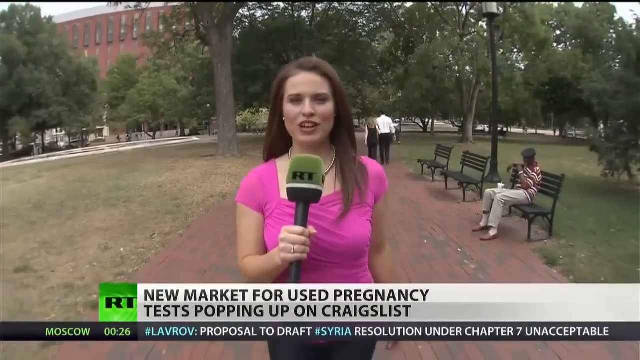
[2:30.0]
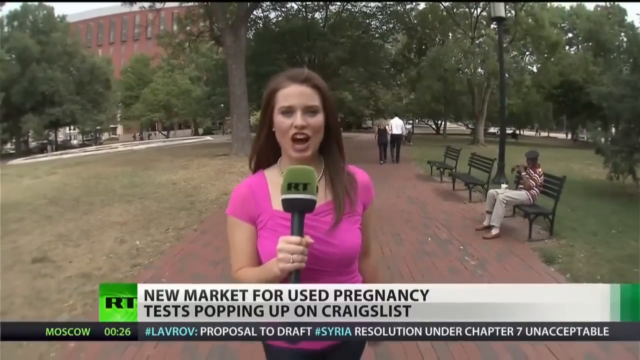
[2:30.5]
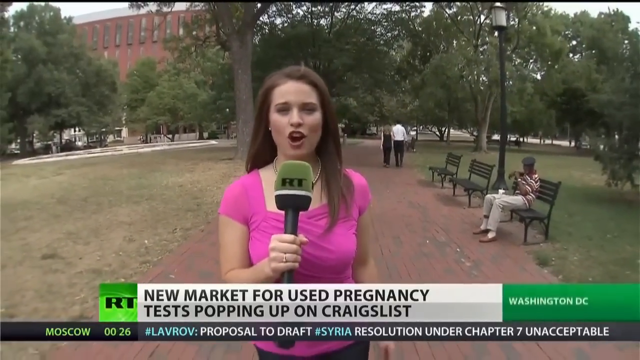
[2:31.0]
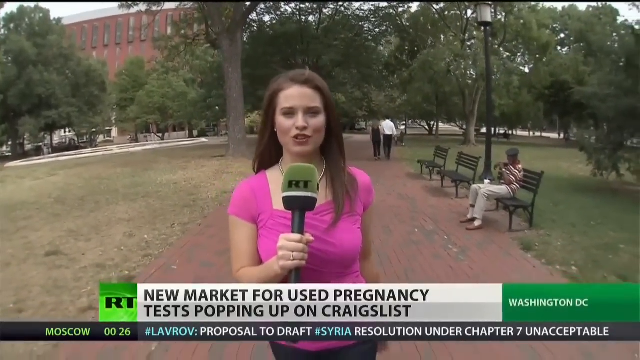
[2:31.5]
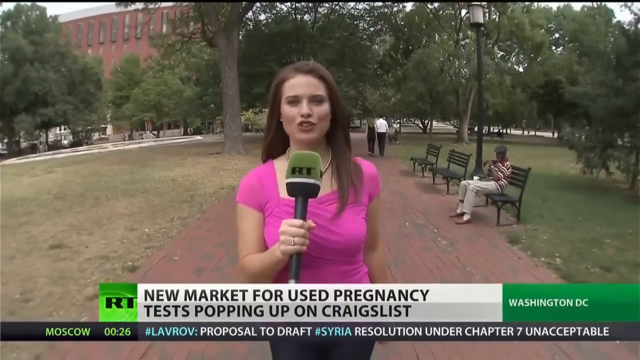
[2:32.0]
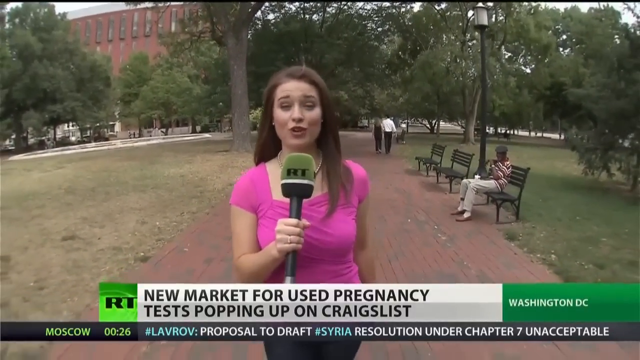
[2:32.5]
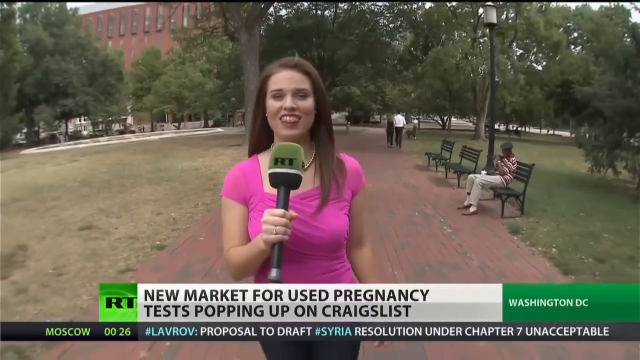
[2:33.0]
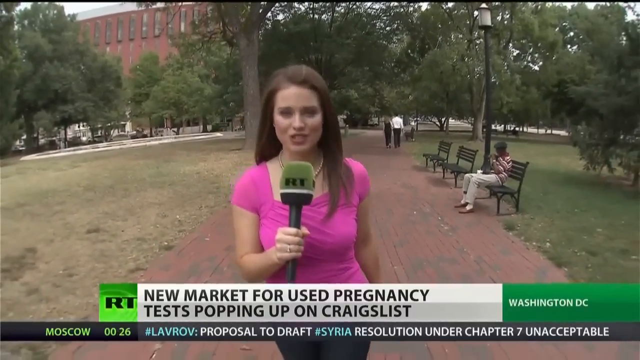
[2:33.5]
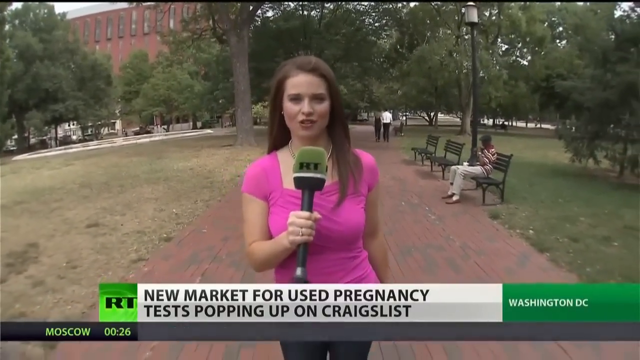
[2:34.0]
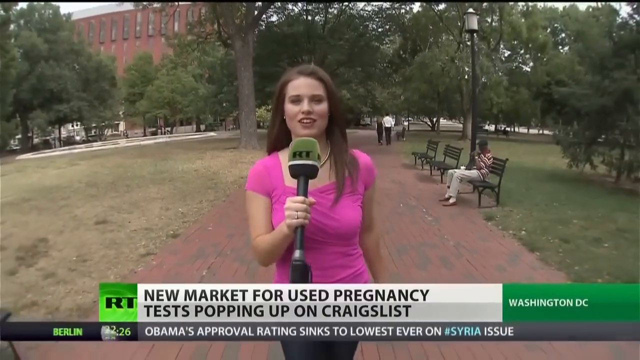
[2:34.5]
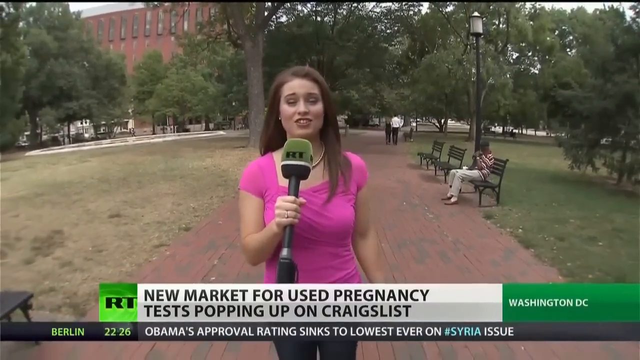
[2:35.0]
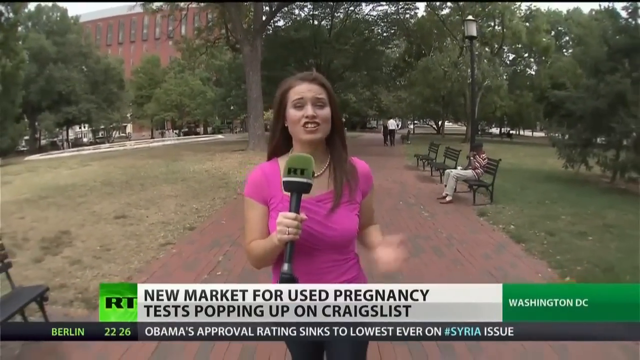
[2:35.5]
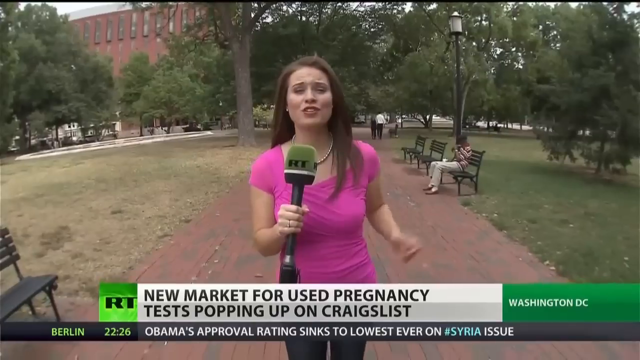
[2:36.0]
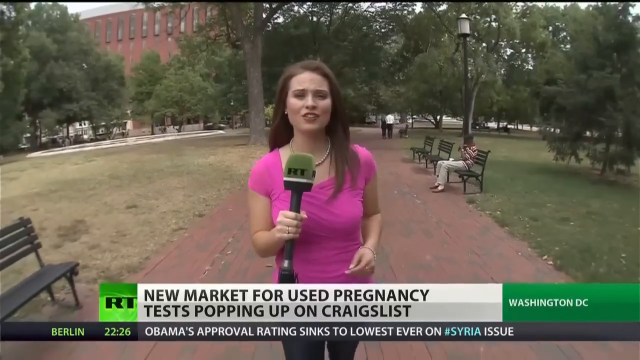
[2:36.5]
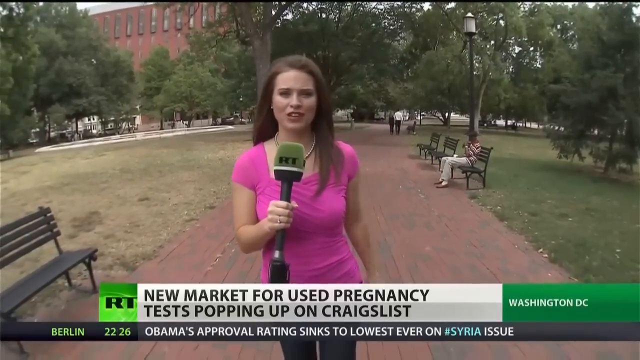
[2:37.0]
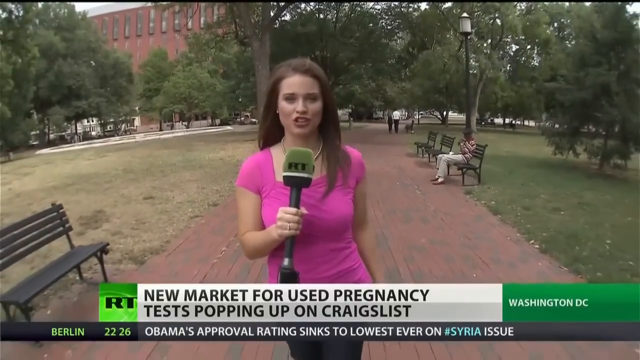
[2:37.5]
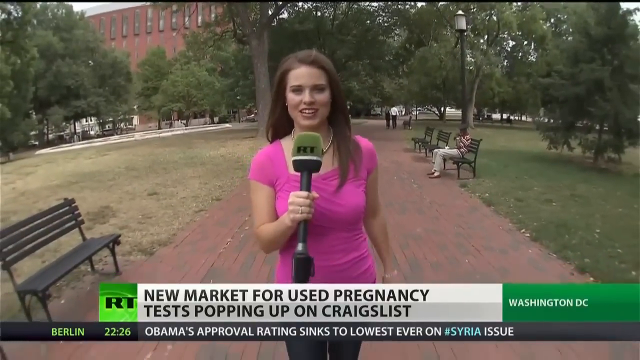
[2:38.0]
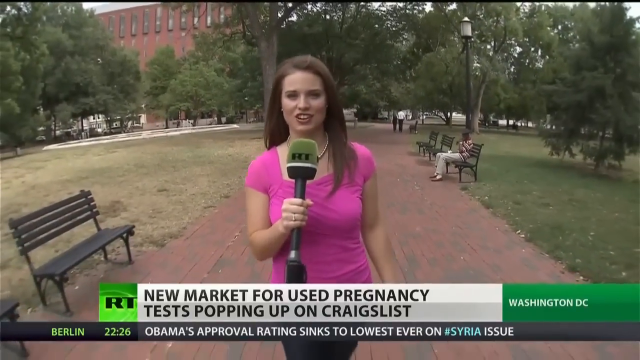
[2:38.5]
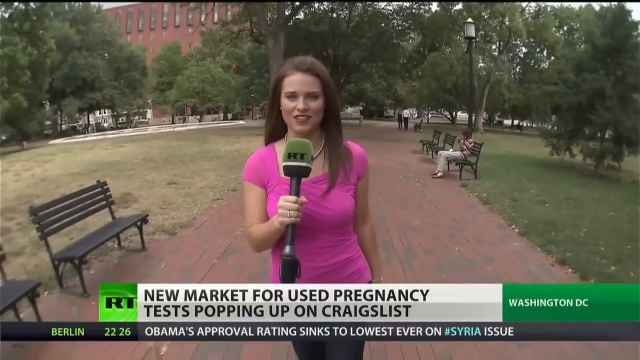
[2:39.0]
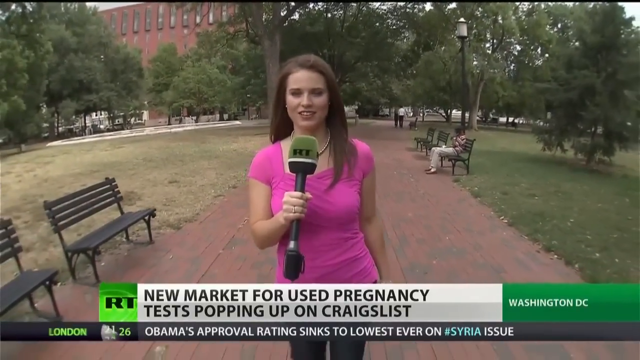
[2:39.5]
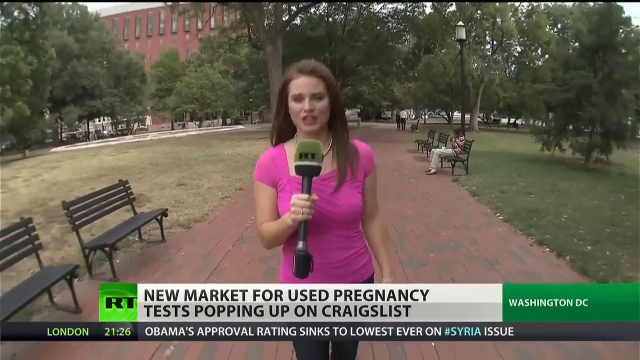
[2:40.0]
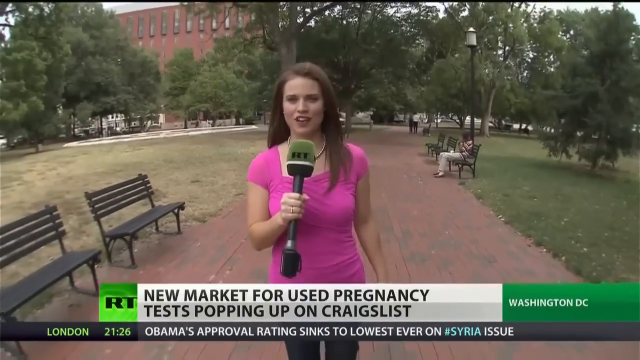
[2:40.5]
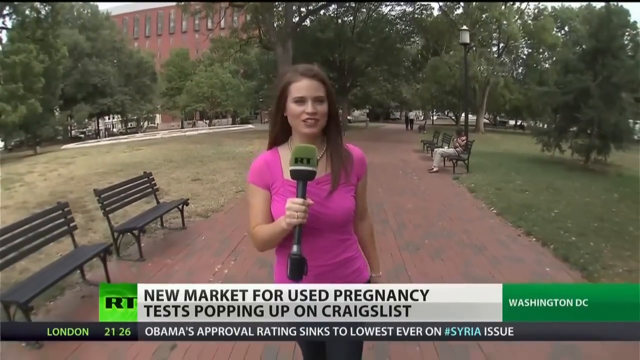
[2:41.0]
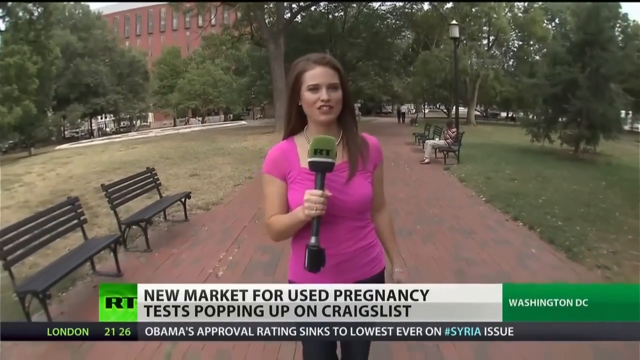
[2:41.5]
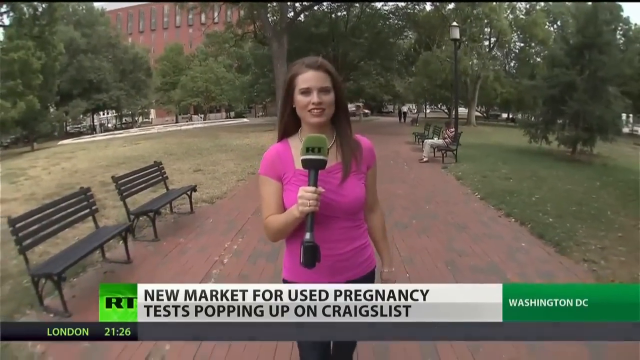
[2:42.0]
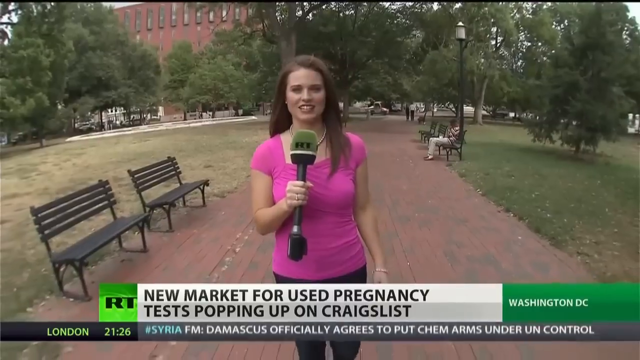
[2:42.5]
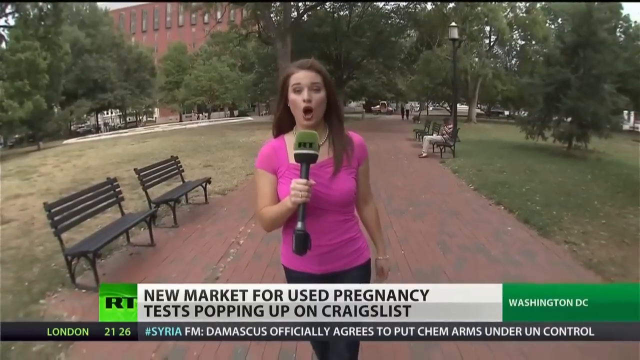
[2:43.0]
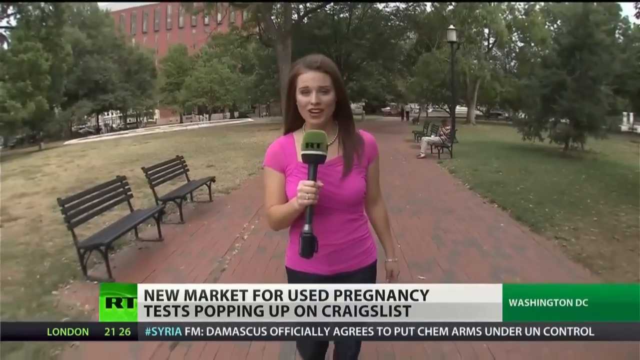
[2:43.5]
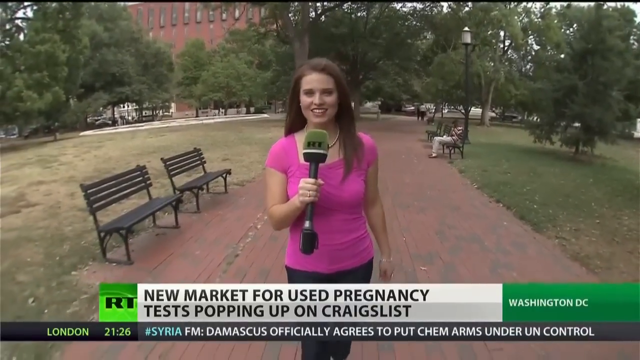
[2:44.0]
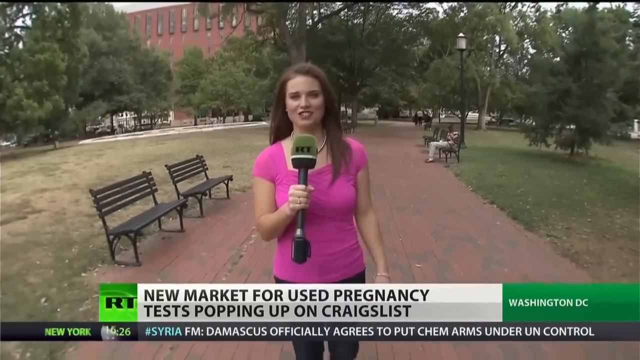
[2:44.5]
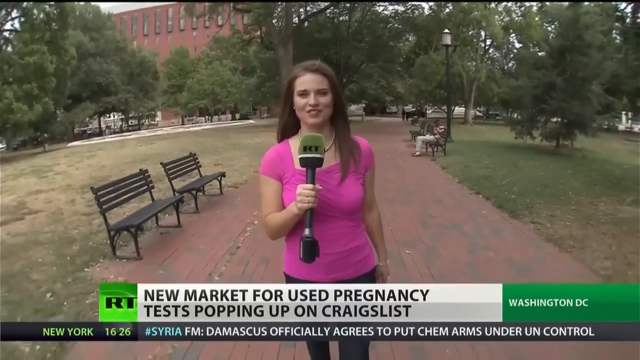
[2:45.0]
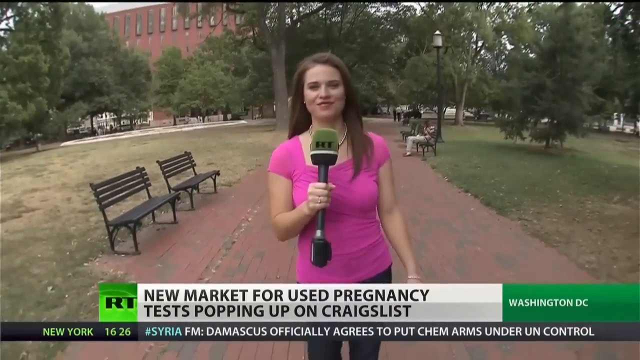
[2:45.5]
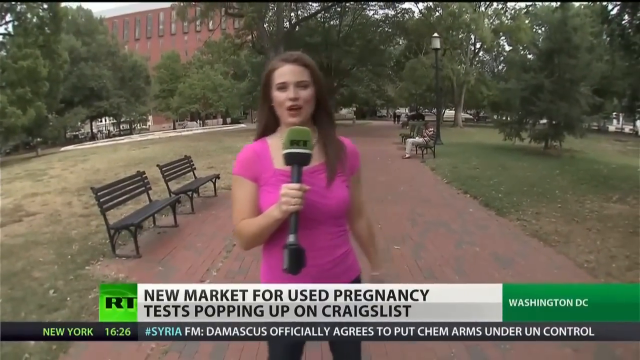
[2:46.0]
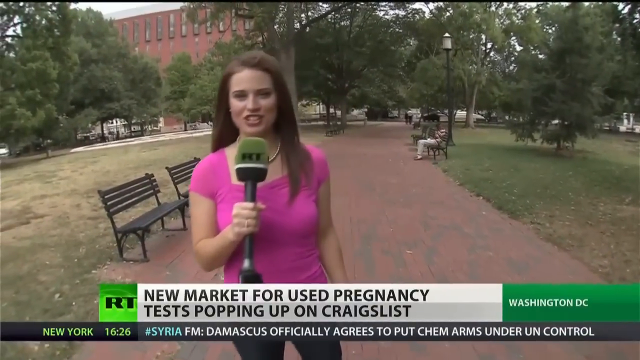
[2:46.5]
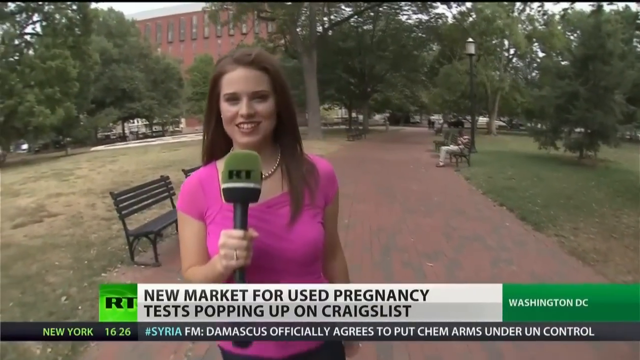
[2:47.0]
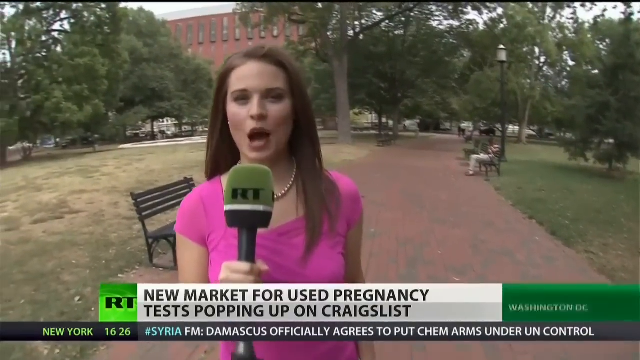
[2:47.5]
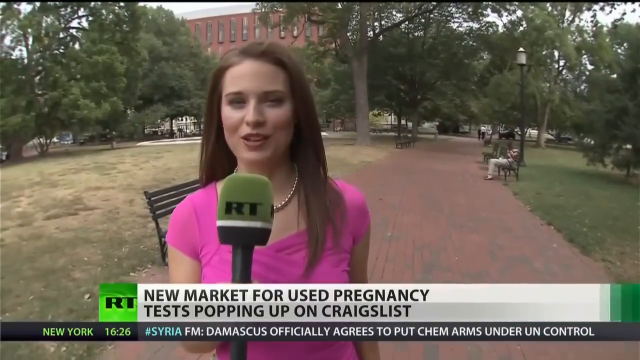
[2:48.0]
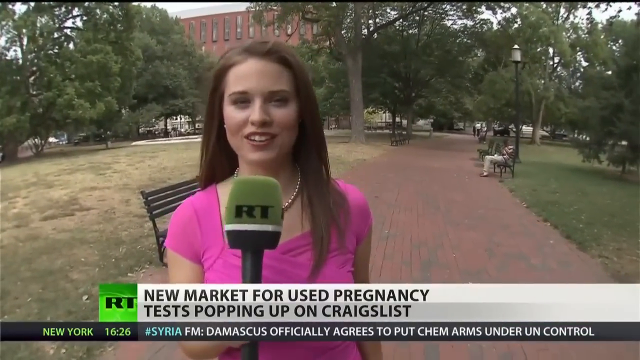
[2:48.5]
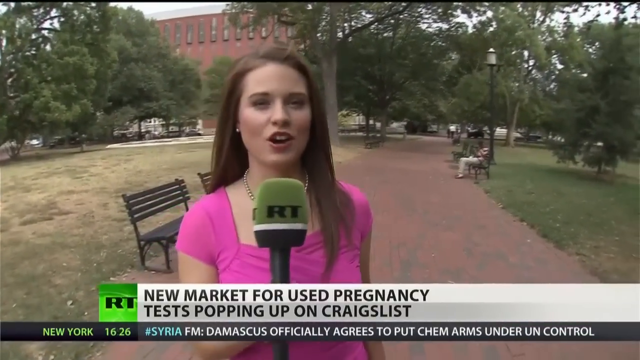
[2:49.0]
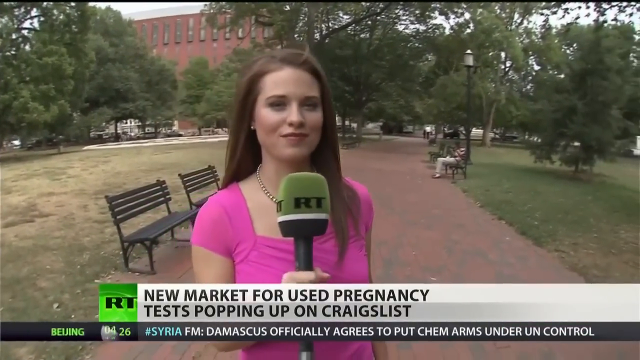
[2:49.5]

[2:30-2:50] The woman in the pink shirt walks in a park with a microphone in her hand. To her right, a person sits on a park bench, and behind her two people walk in the other direction: a man in a white shirt and a woman in a dark-colored shirt and pants. As she walks forward she talks into the microphone. Text at the bottom of the screen reads "New market for used pregnancy tests popping up on Craigslist," with a line below beginning "Obama's approval rating" and ending "lowest ever on Syria issue." To the left is "Berlin 2226," with the RT logo above it, black letters on a green background, and at the far right "Washington DC under UN control." The video ends with the woman still talking and walking through the park. She has long brown hair past her shoulders and holds the microphone in her right hand; it is black, with a dark green dust cap bearing the black RT logo.